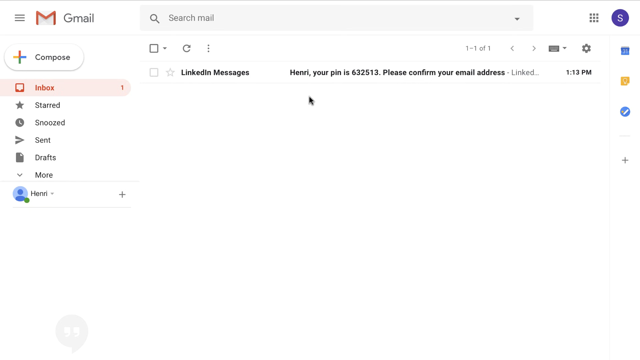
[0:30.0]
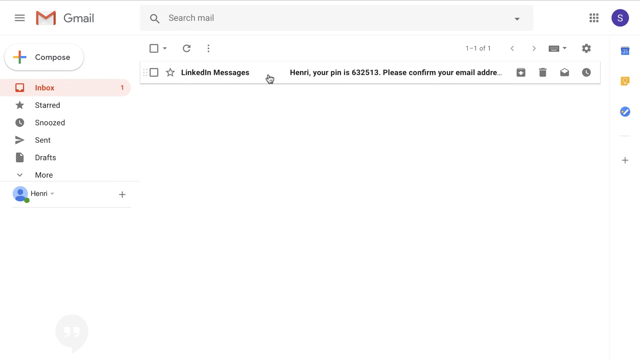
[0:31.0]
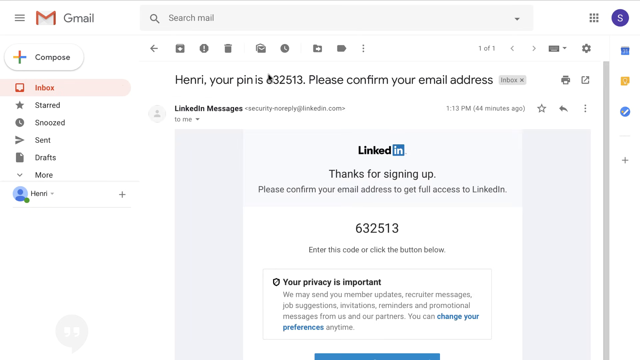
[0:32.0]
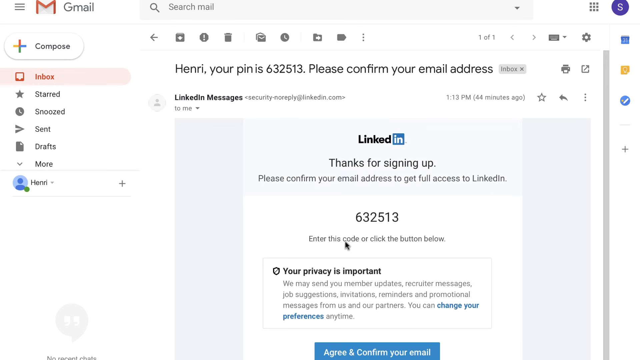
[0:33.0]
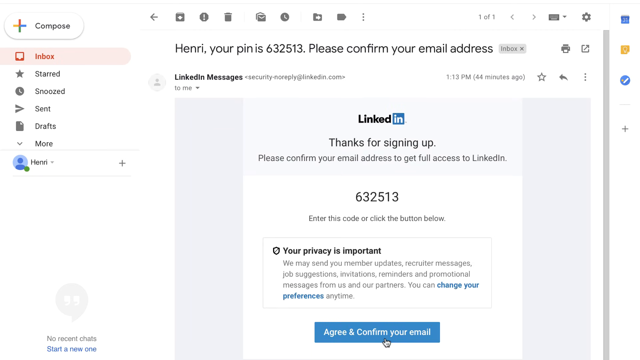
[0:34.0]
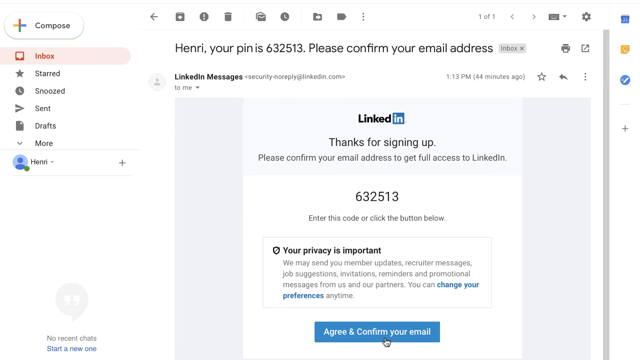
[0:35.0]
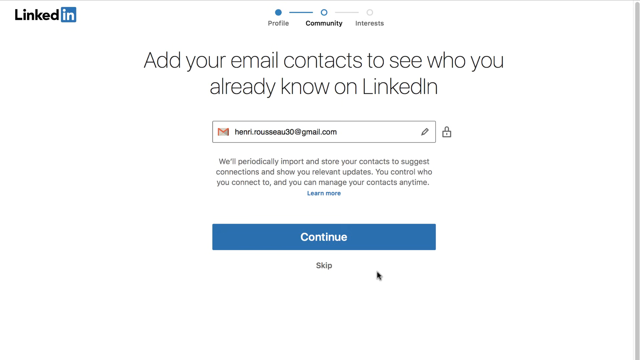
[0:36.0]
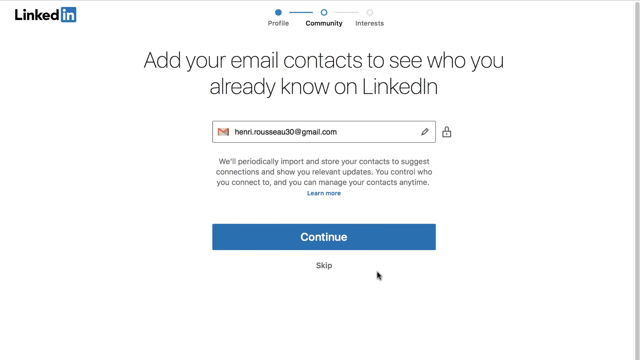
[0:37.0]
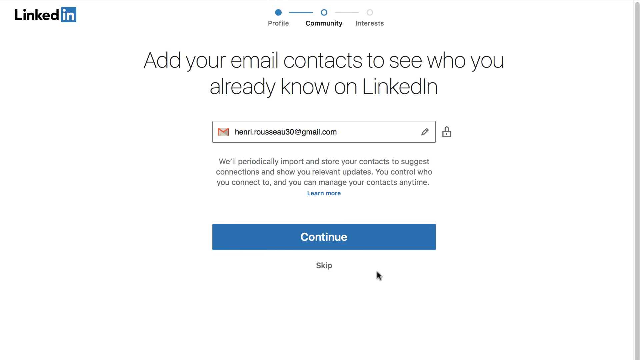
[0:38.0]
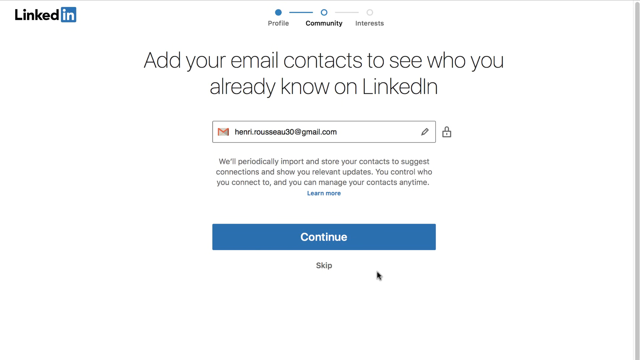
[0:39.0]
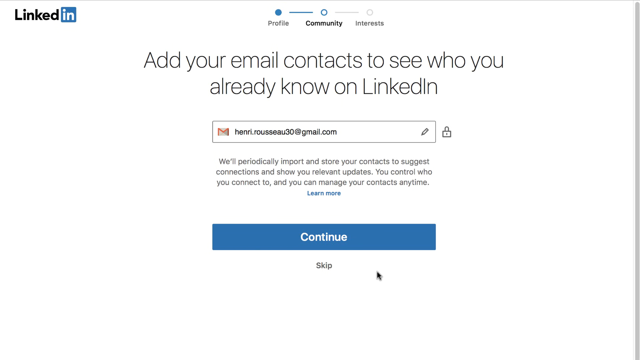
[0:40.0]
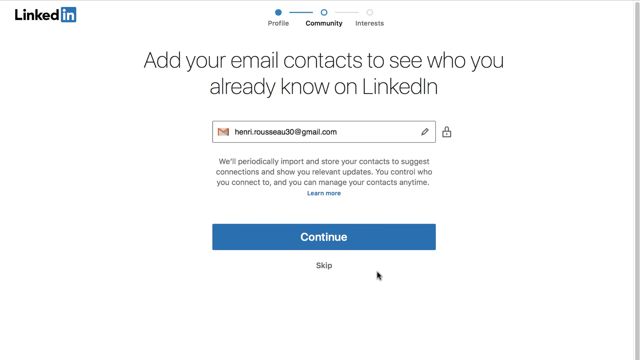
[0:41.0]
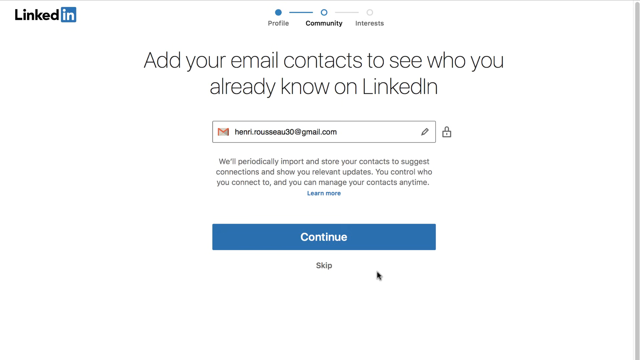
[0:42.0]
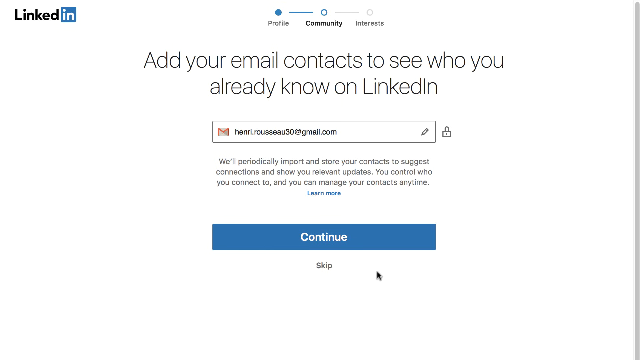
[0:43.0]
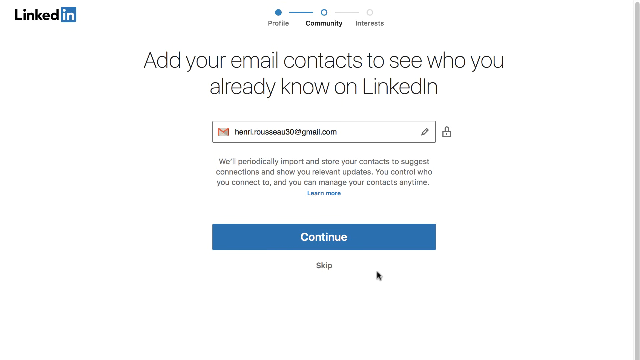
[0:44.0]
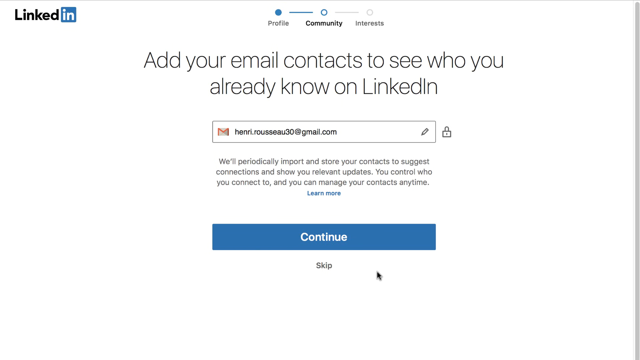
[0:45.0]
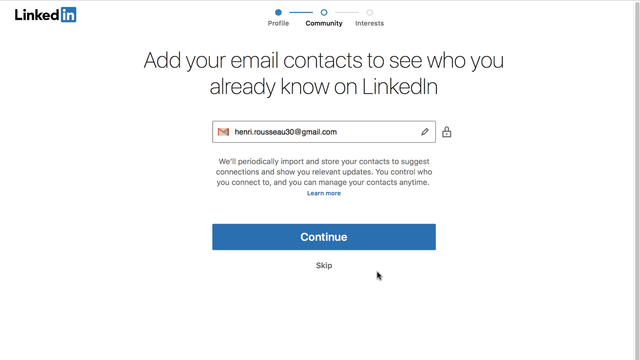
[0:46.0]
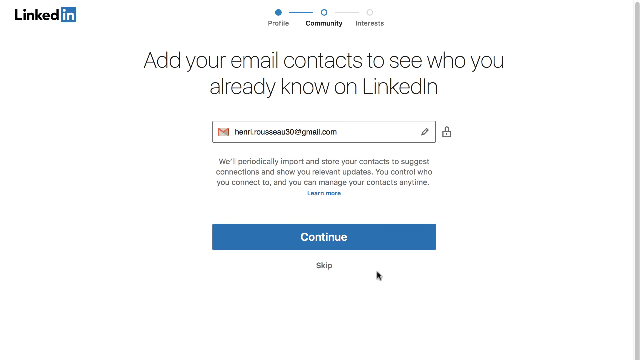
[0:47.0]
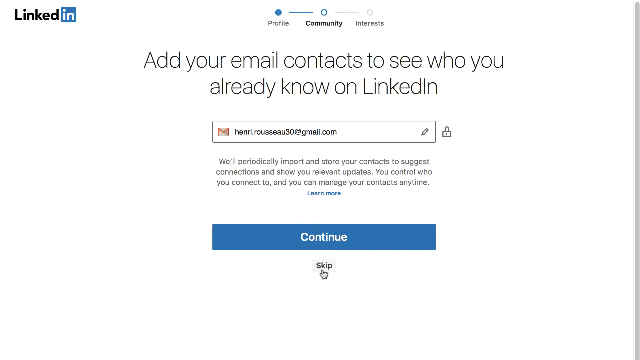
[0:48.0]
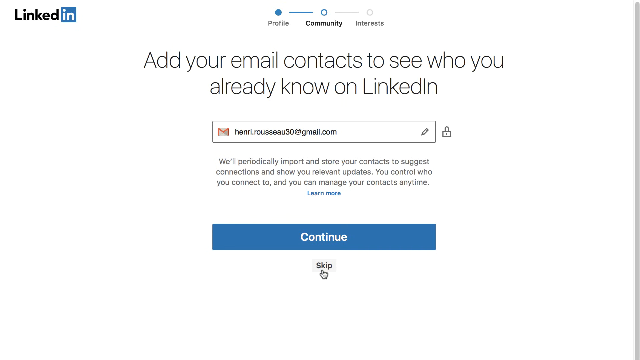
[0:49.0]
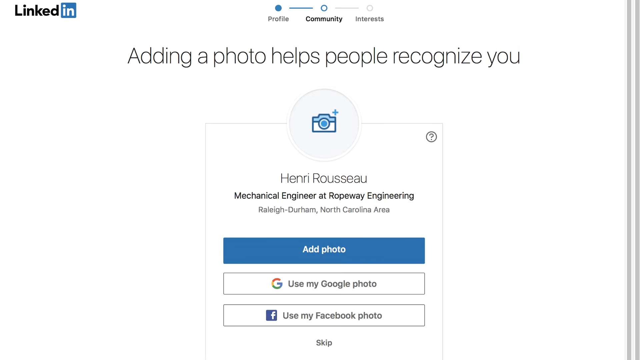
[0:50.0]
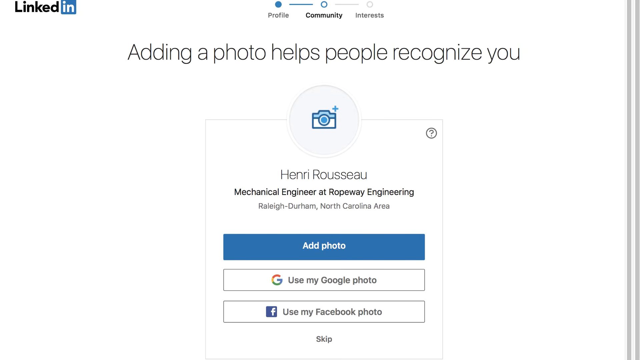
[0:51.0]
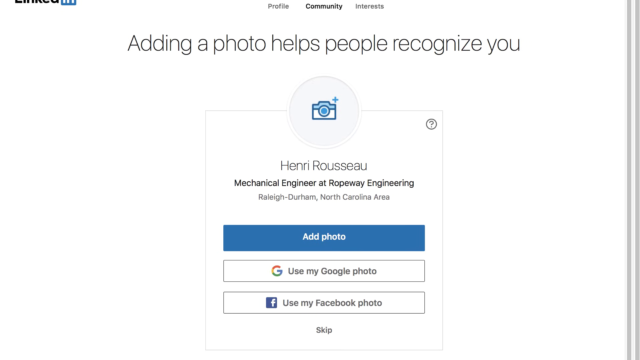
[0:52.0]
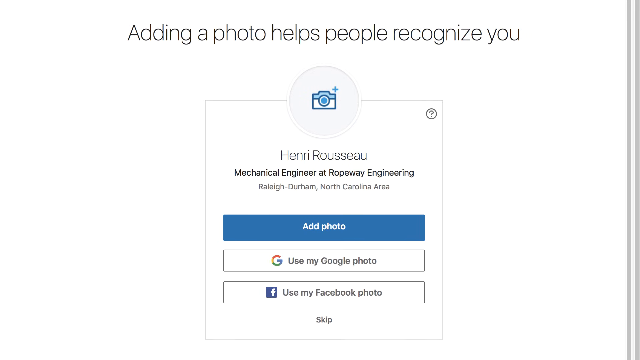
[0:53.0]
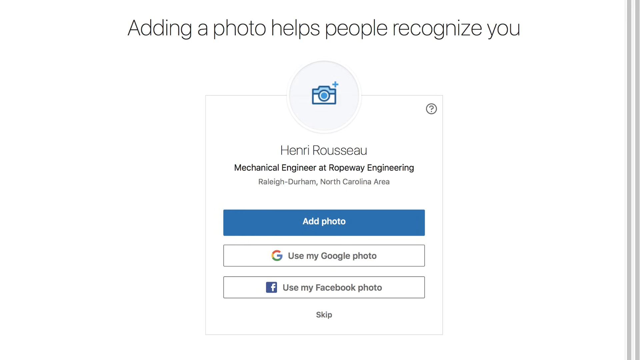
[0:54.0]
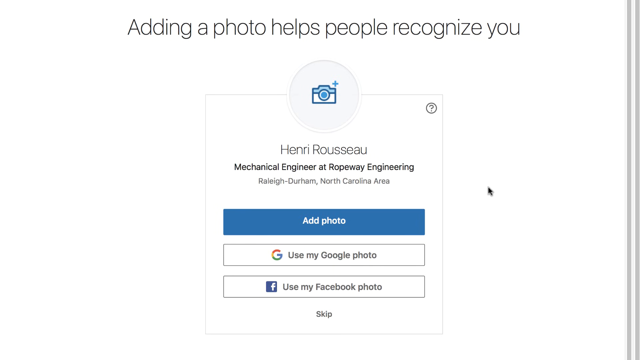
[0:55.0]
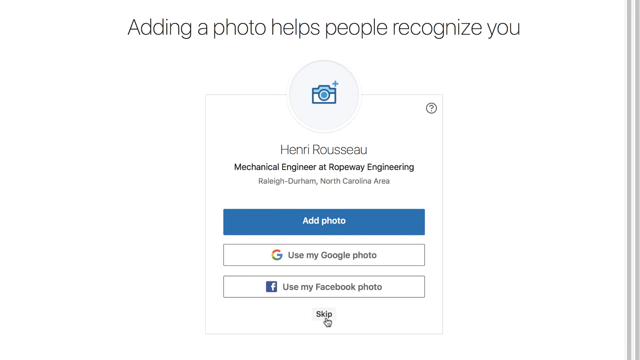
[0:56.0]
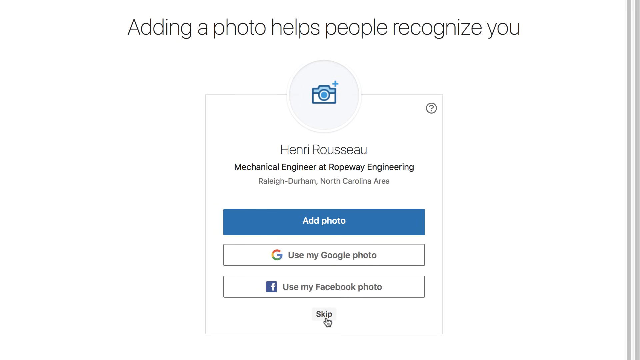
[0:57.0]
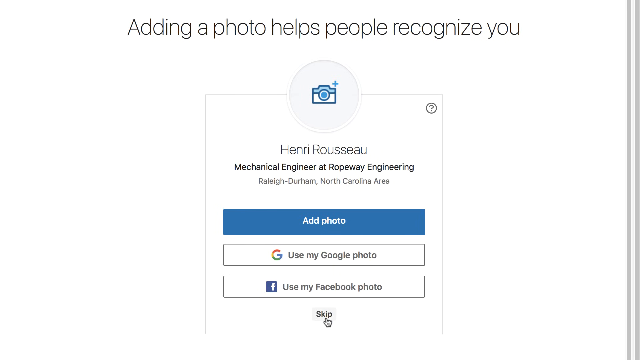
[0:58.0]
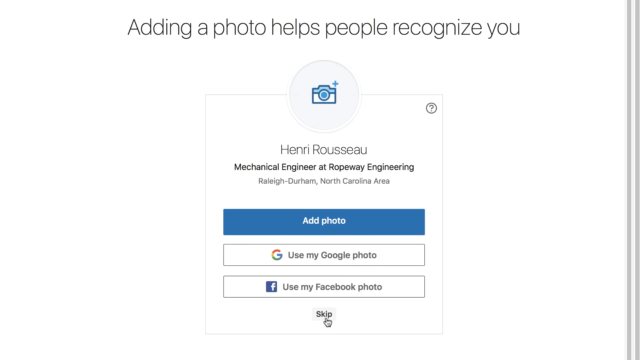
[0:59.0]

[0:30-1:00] A screen appears for getting an OTP number, which apparently comes through email, and the OTP and the email address are entered. Next, a screen prompts adding a photo, noting that a photo helps others recognize the user, and it also shows the option of using Google Photos. Then Gmail opens, showing the inbox with a LinkedIn message containing a pin, which has to be confirmed to finish signing in to LinkedIn.